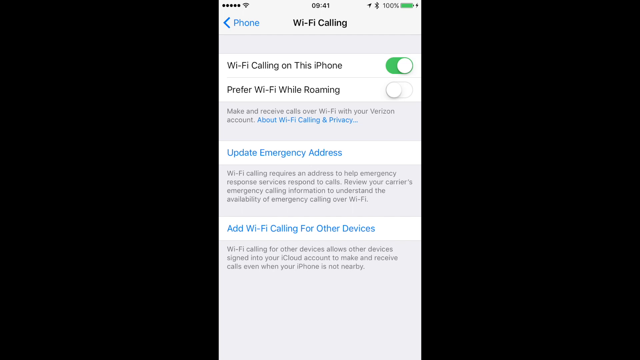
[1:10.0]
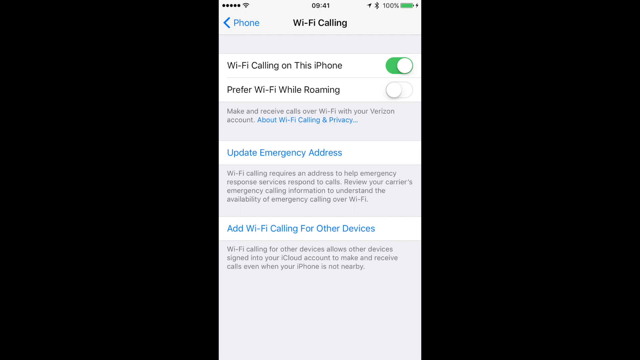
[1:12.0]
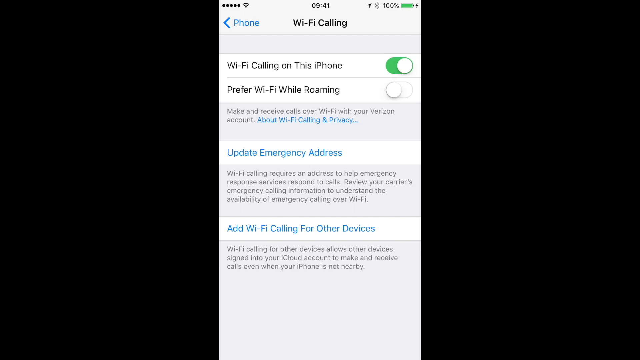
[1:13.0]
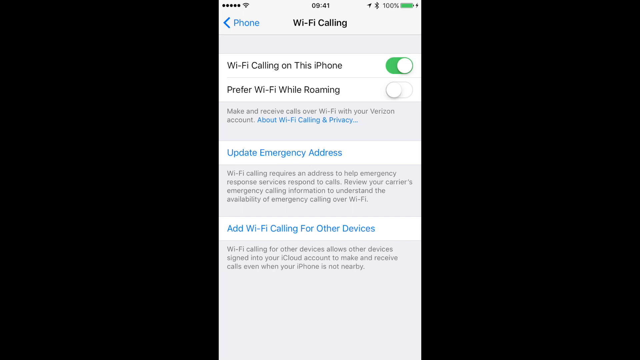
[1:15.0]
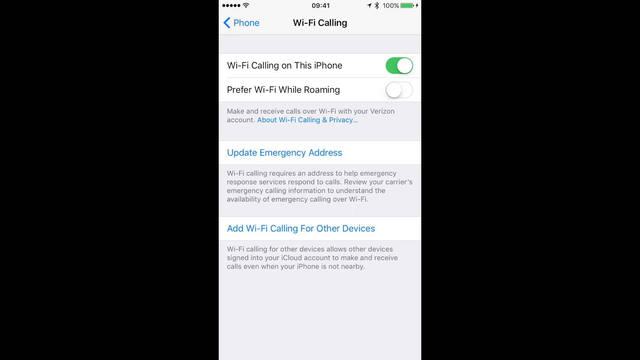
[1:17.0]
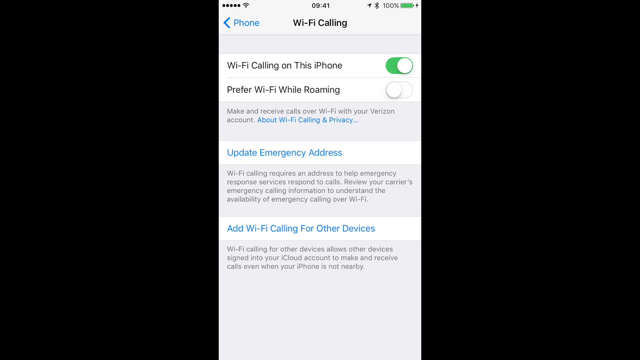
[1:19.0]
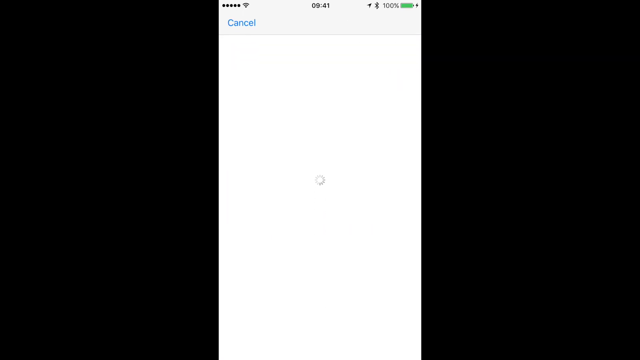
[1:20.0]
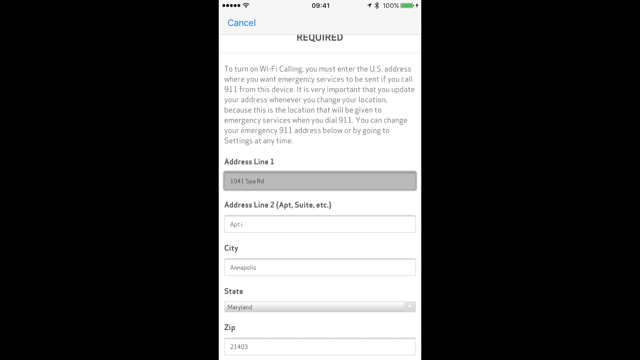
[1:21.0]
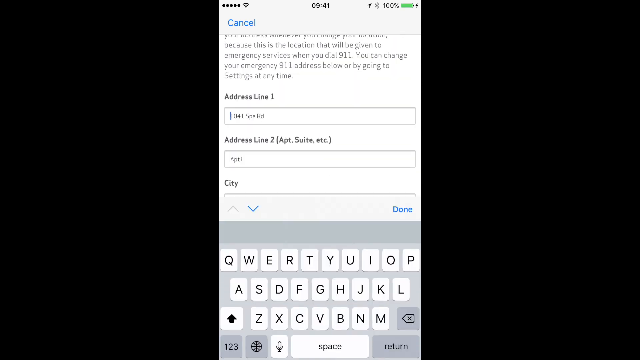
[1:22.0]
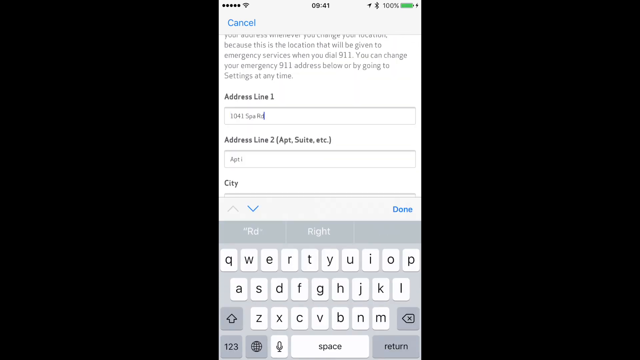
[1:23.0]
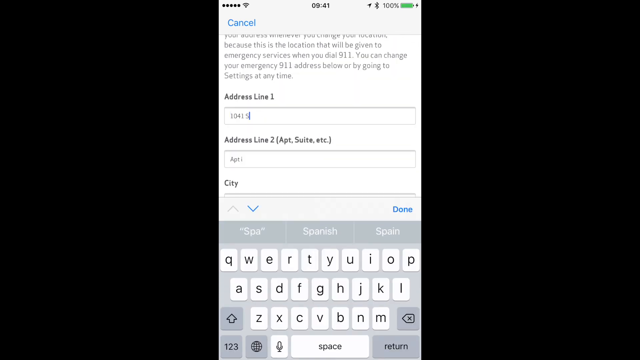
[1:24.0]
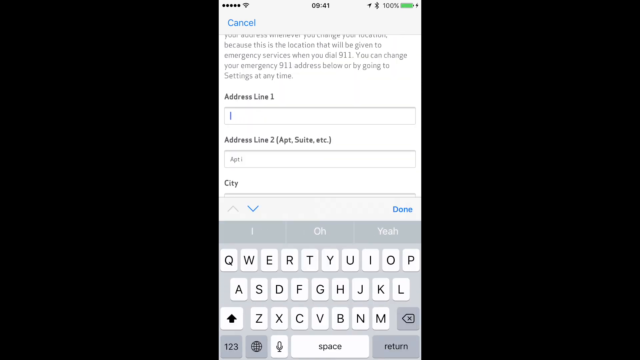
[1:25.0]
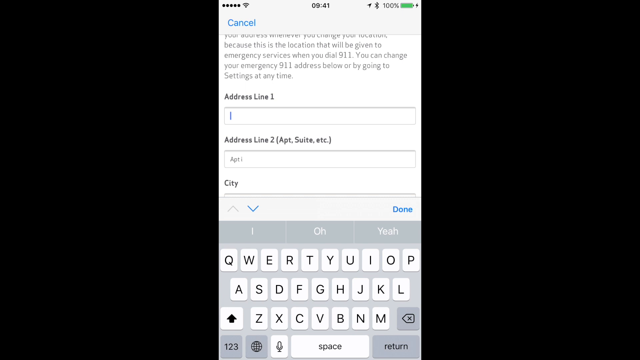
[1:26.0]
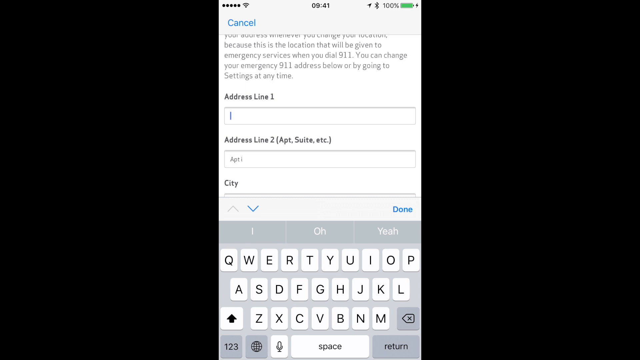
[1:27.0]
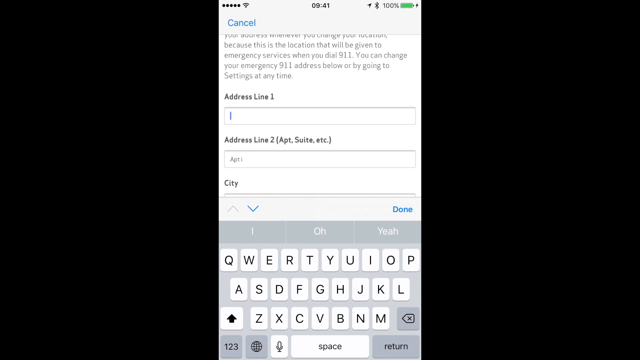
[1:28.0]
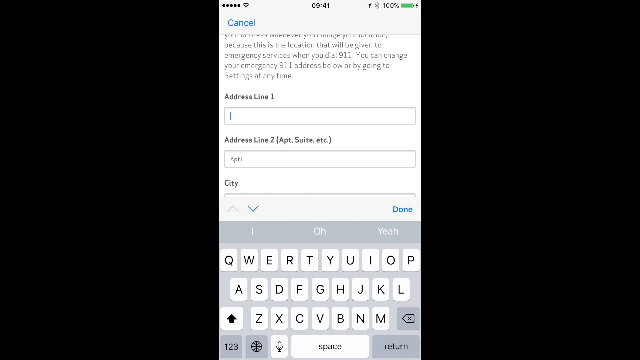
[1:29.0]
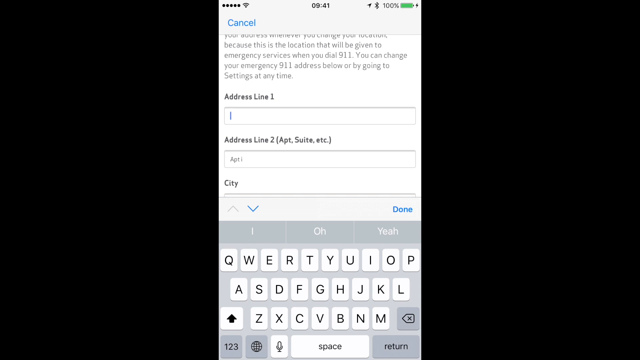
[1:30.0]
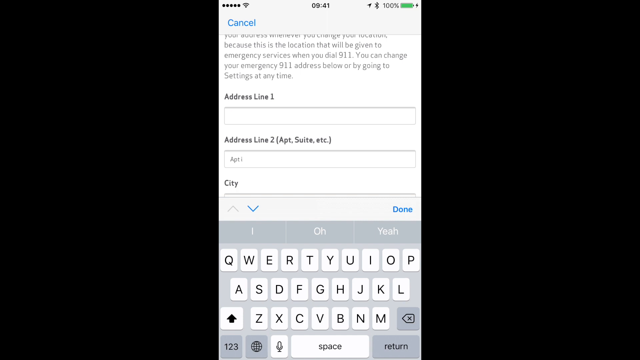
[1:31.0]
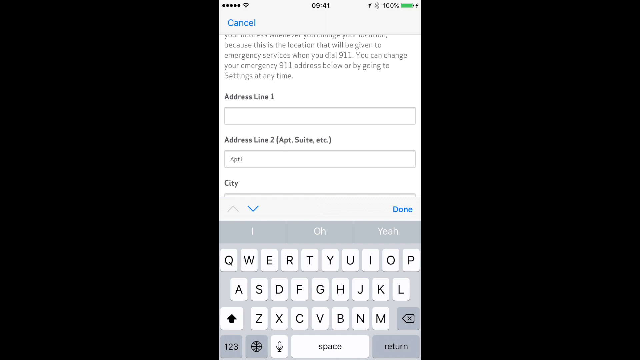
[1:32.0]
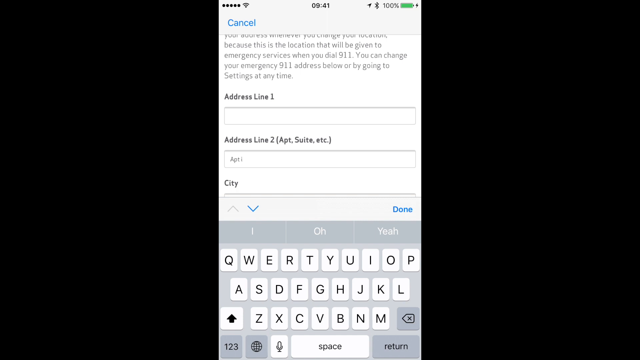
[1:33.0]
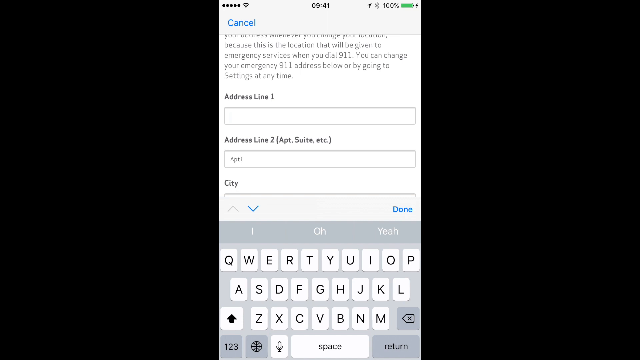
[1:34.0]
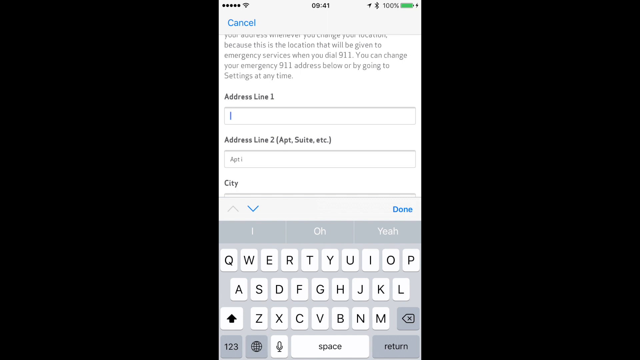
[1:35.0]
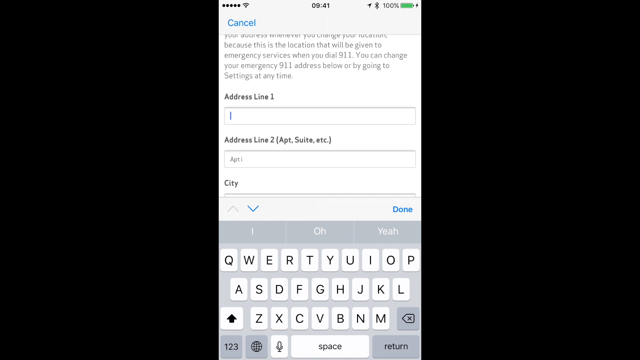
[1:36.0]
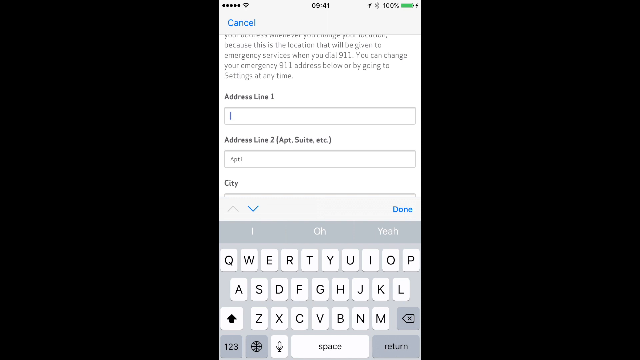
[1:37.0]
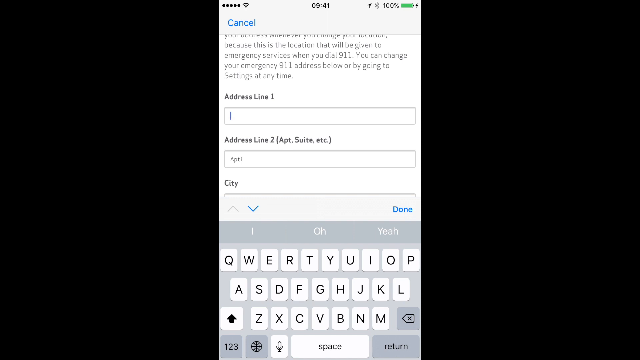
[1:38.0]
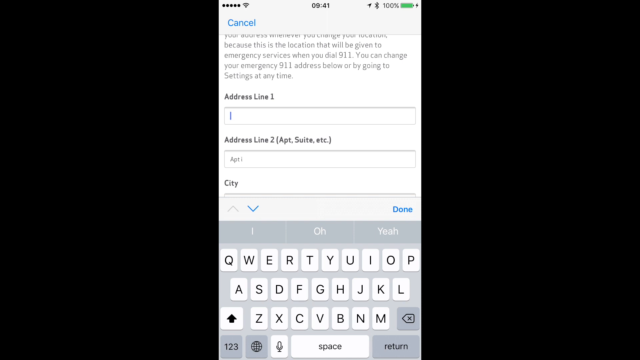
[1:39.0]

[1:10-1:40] The mobile device screenshot is in the center of the all-black background, showing the Wi-Fi calling settings section. In the upper left corner is a blue arrow pointing left with the word "phone" in blue to go back to the phone settings, and "Wi-Fi calling" appears in black bold text in the center underneath the time. The option for Wi-Fi calling on this phone has been toggled on with a toggle button to the right of the text, and underneath it, prefer Wi-Fi while roaming has its toggle off. Below are update emergency address and add Wi-Fi calling for other devices, which have text information but no toggle buttons. The screen stays there for several seconds, then the update emergency address option is selected and the next screen comes up with important information.